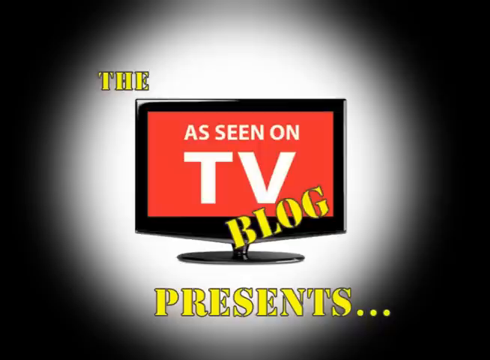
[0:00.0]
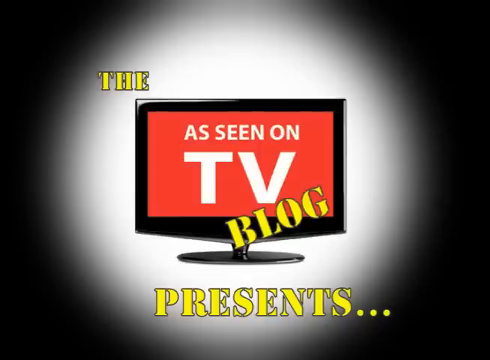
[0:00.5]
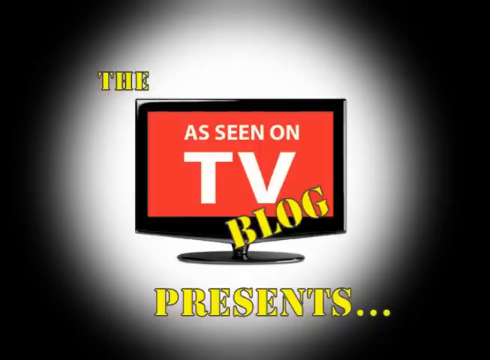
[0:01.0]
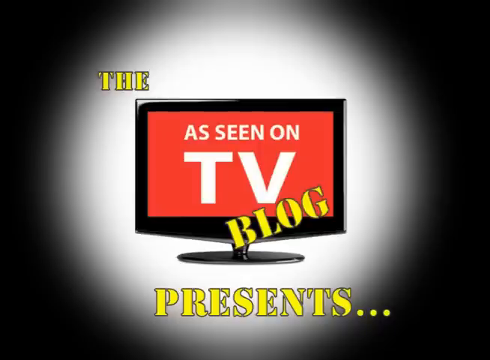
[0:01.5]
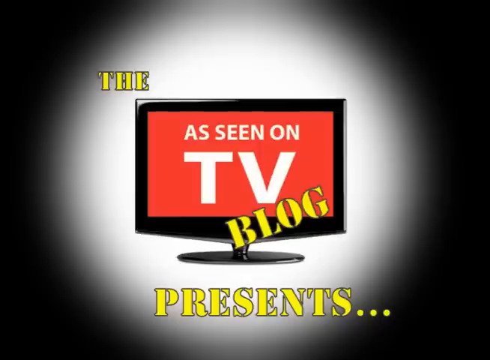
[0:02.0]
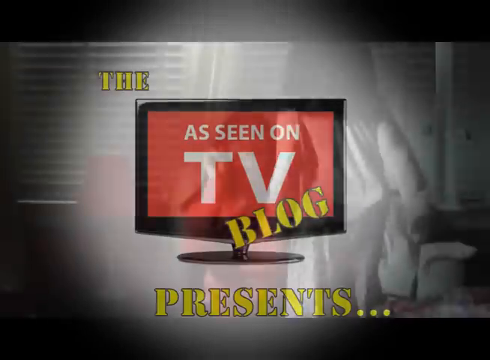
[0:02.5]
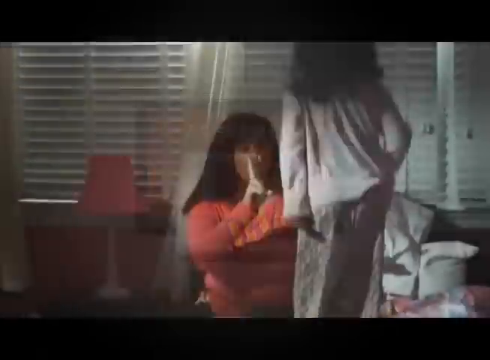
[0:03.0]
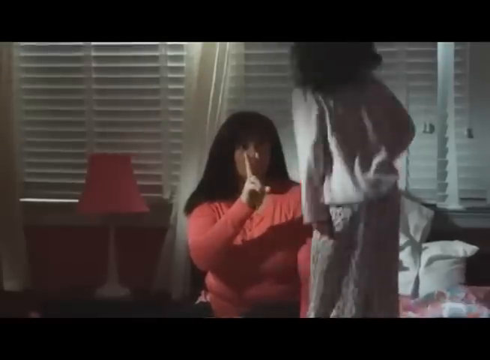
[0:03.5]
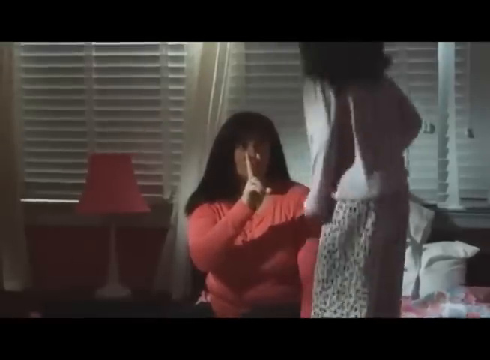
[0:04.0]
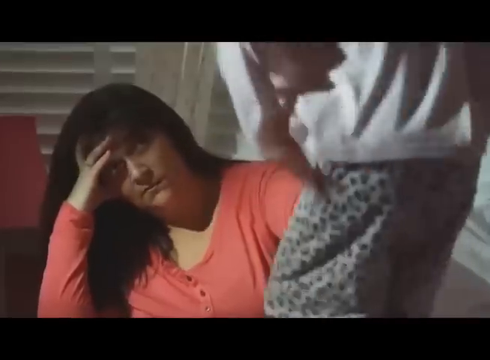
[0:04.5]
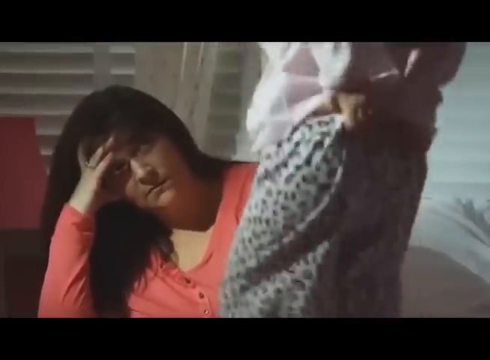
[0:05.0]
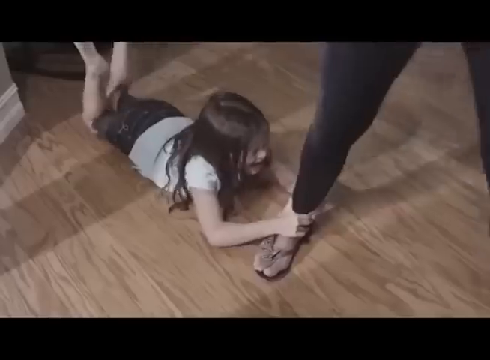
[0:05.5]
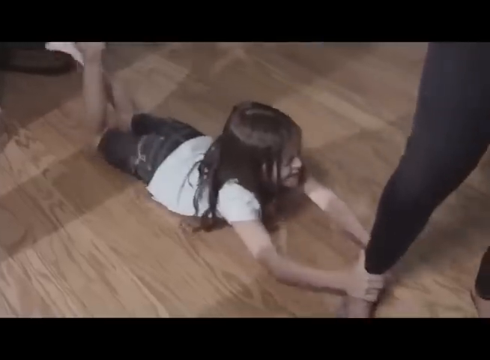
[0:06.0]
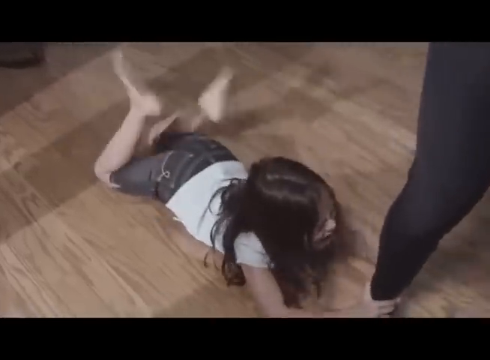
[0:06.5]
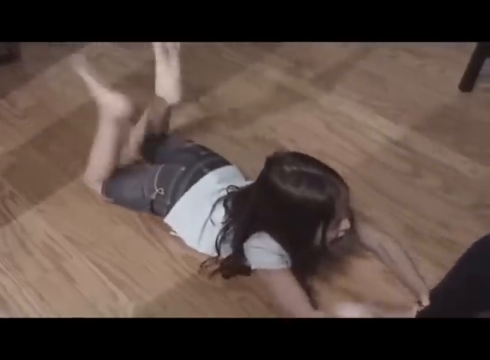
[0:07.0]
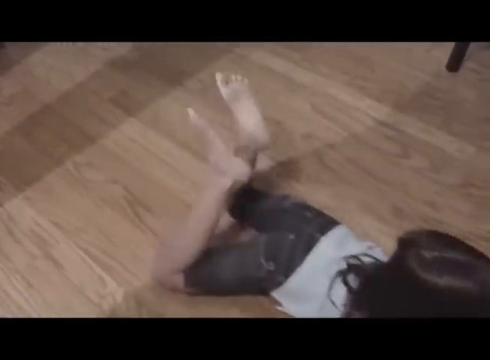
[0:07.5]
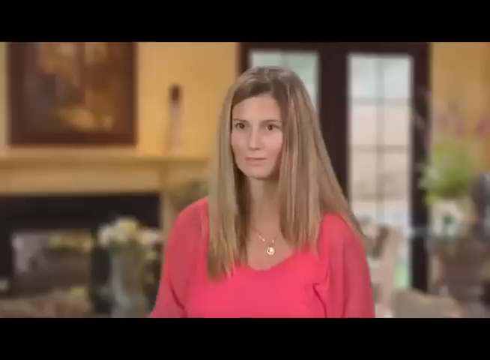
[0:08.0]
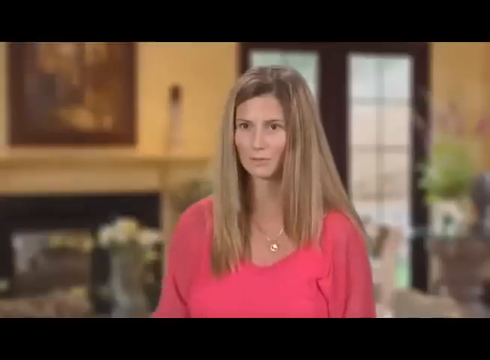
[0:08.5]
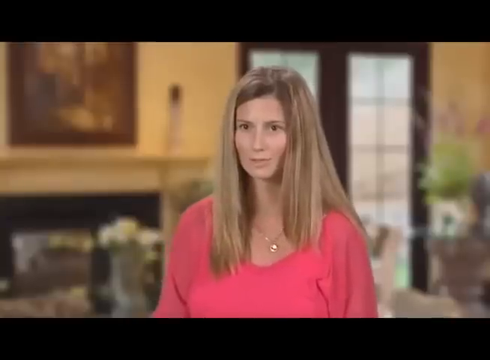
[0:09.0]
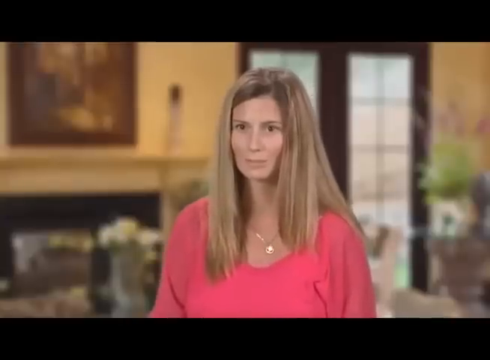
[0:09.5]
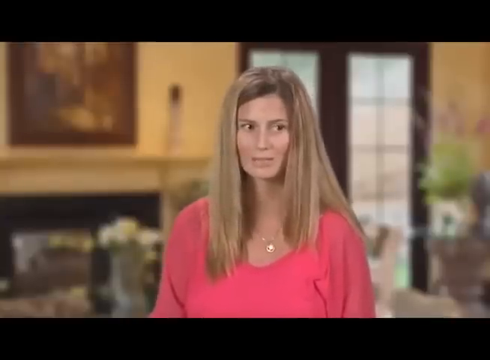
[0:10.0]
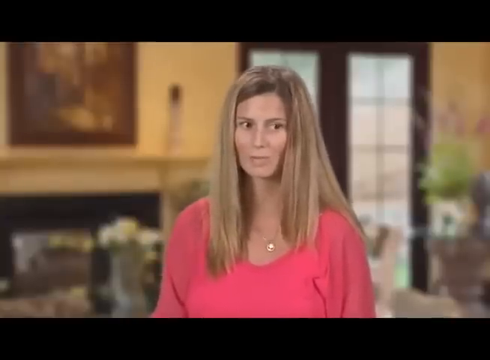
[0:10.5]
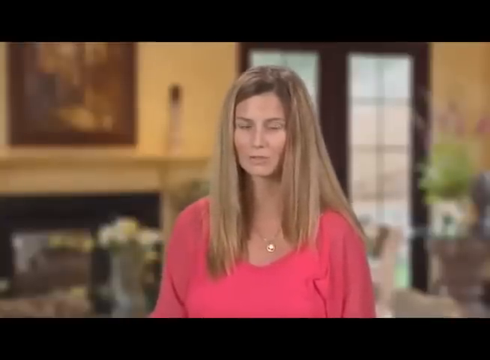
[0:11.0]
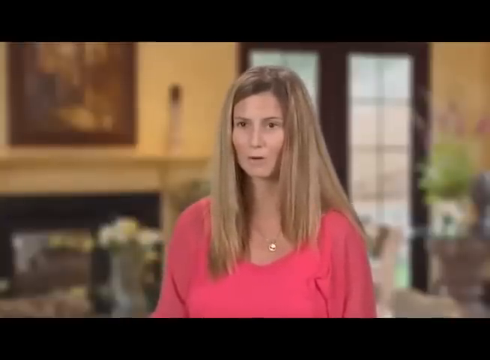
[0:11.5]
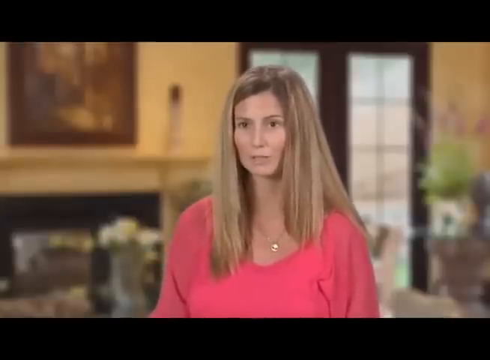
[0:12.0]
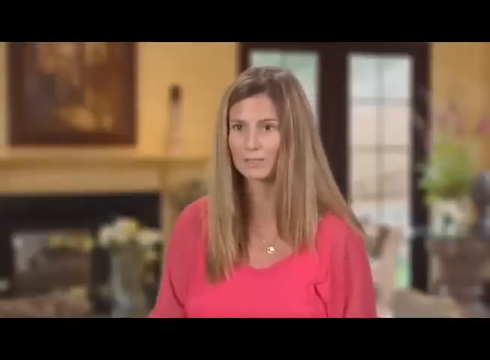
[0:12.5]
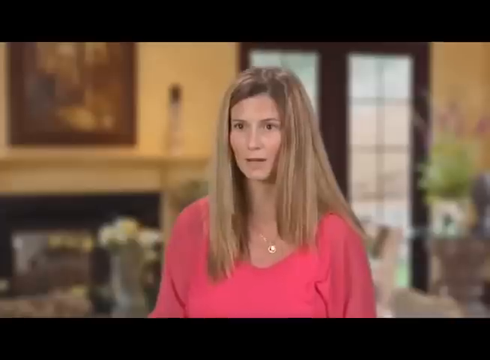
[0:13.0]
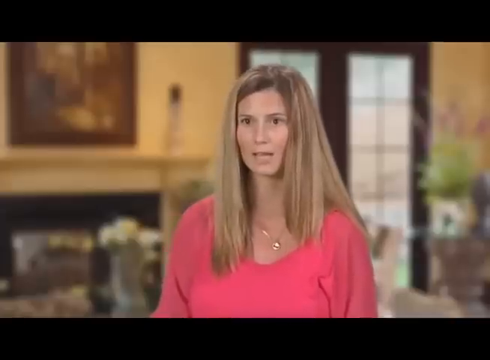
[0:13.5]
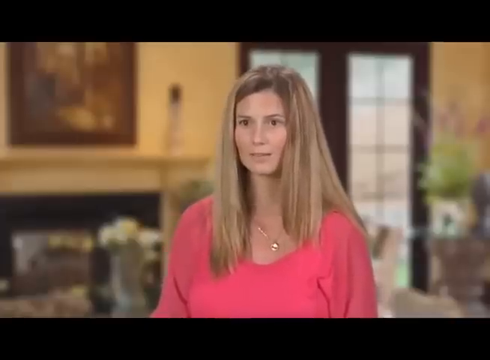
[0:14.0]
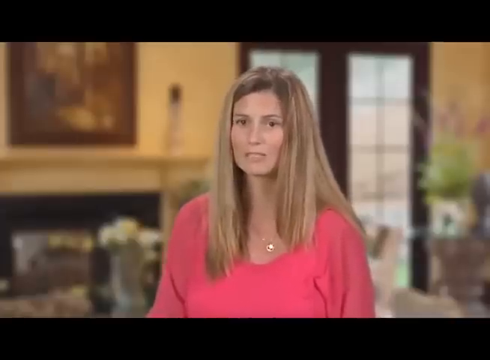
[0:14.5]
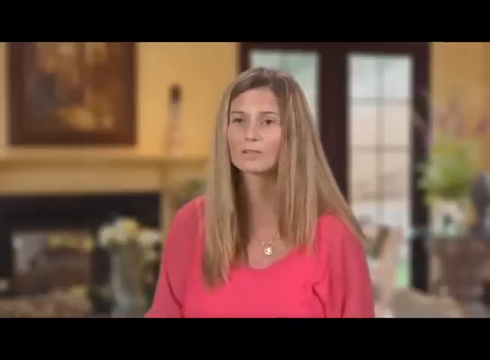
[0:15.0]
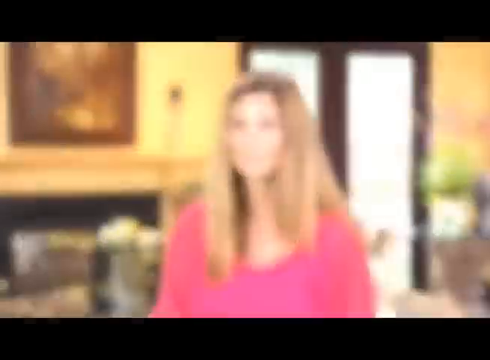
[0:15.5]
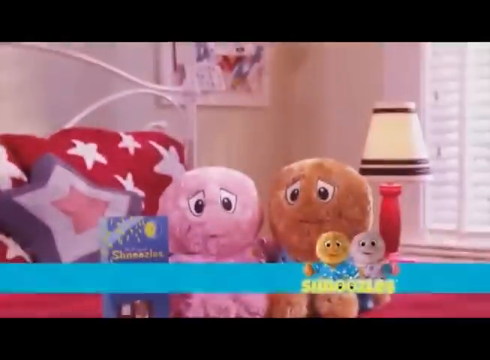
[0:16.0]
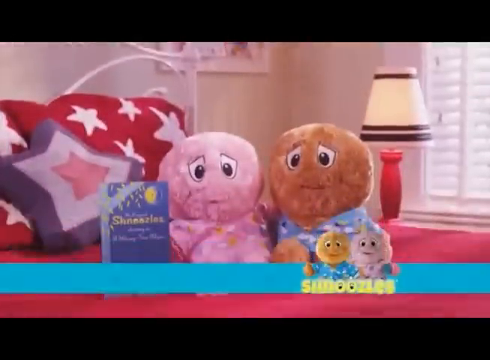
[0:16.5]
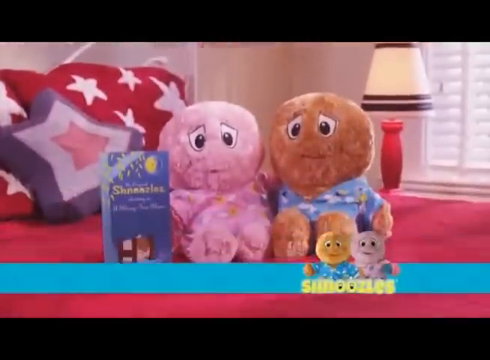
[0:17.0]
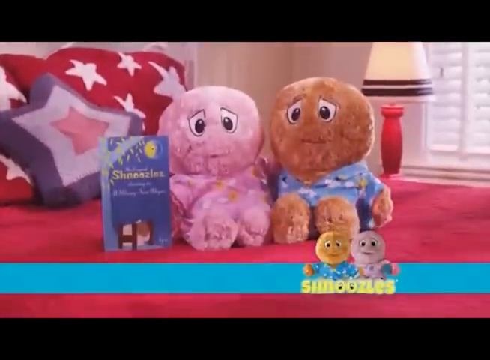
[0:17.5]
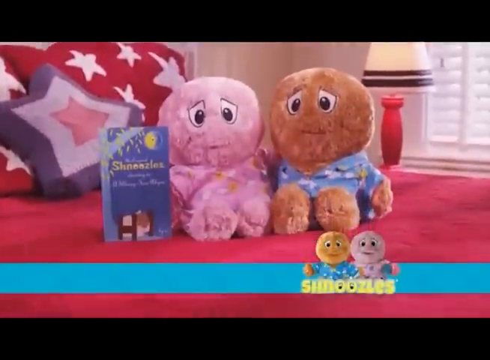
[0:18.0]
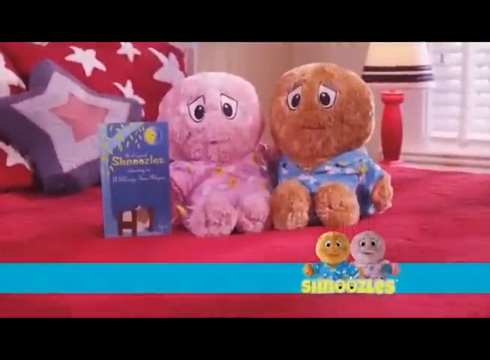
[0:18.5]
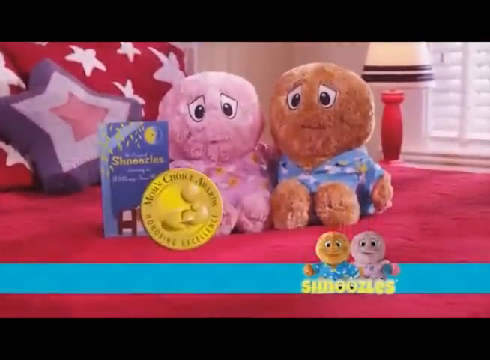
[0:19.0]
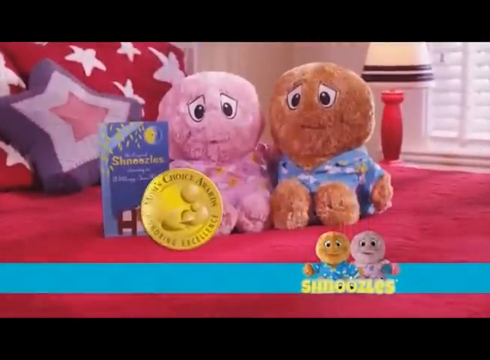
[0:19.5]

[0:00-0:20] The video opens on a digitally produced background with the text "the as seen on TV blog presents...". A mother appears with her daughter, who is jumping on the couch; as the mother tries to walk through the house, the girl grabs at her leg. A woman then talks to the camera and seems sad. Next, two little stuffed animals are sitting on a red bed, and text in the background says it is a mom's choice award, an excellence award with a label on it. The stuffed animals also appear shrunk down in the lower portion of the picture, kind of over to the right. One is pink and the other is brown, and both are wearing pajamas.